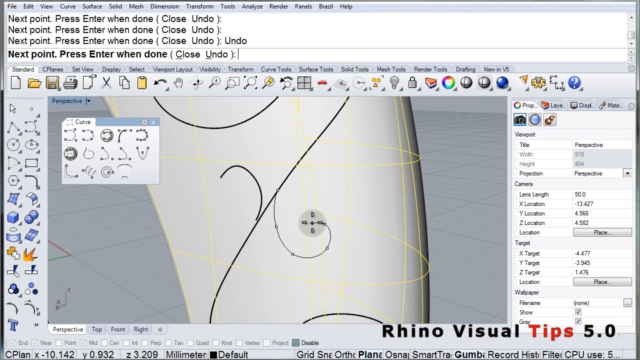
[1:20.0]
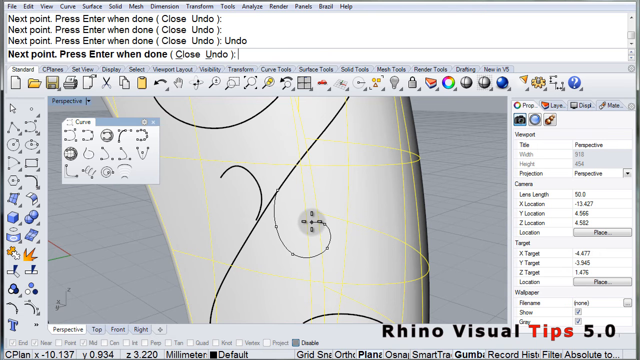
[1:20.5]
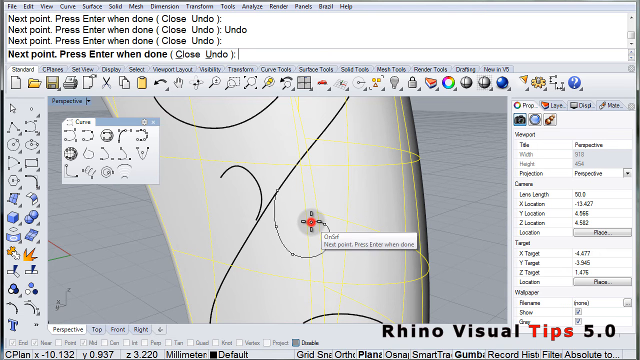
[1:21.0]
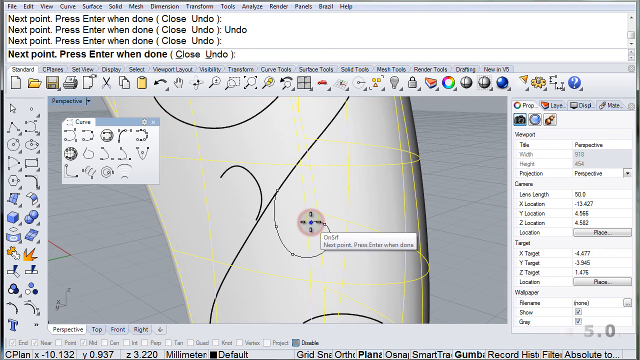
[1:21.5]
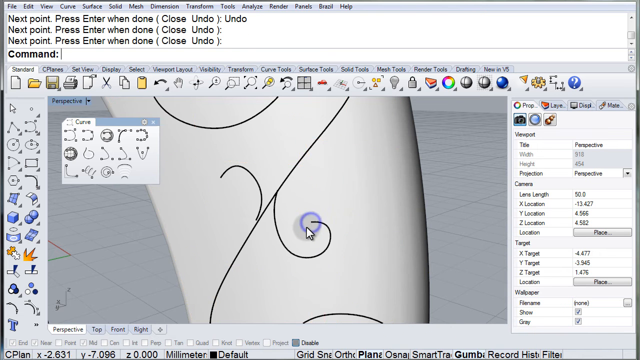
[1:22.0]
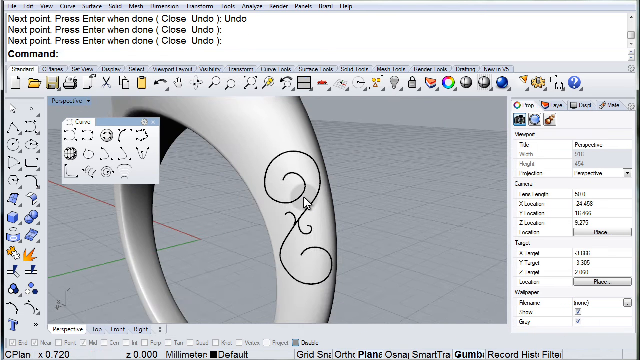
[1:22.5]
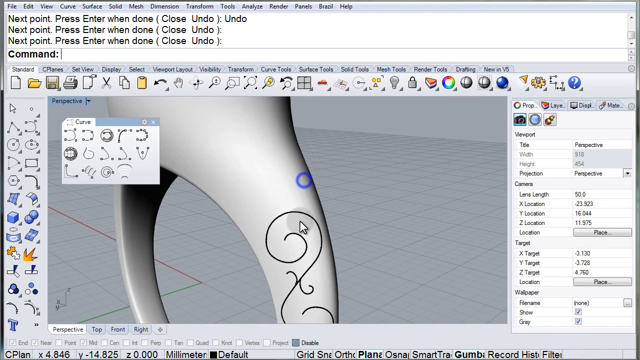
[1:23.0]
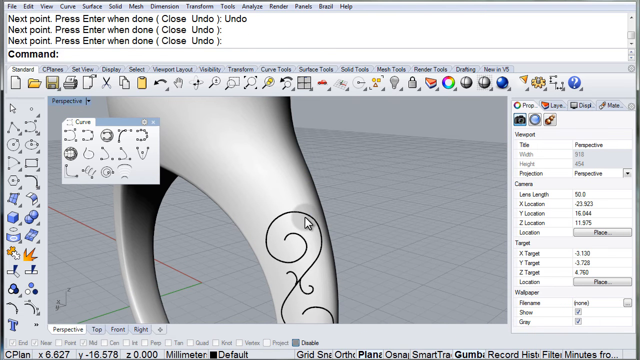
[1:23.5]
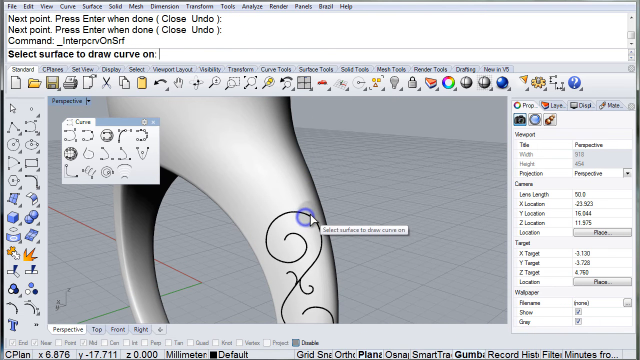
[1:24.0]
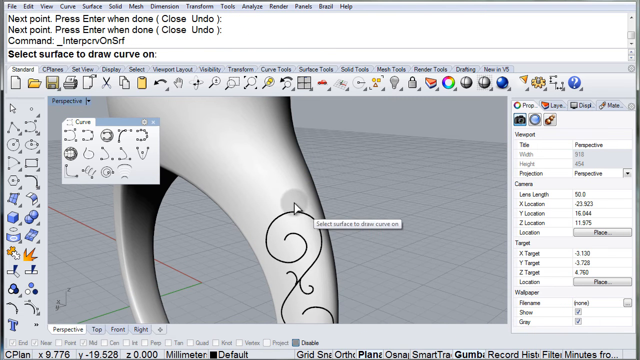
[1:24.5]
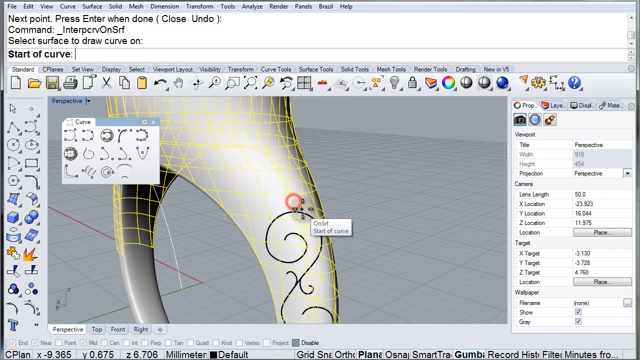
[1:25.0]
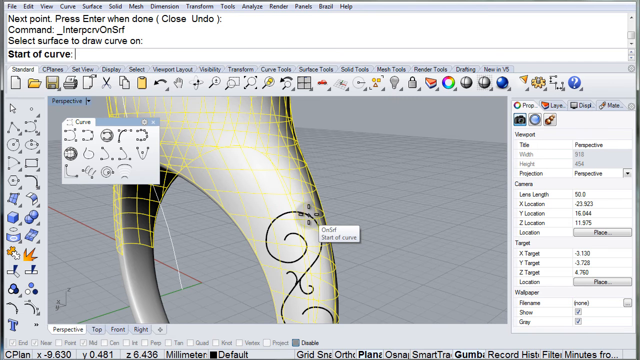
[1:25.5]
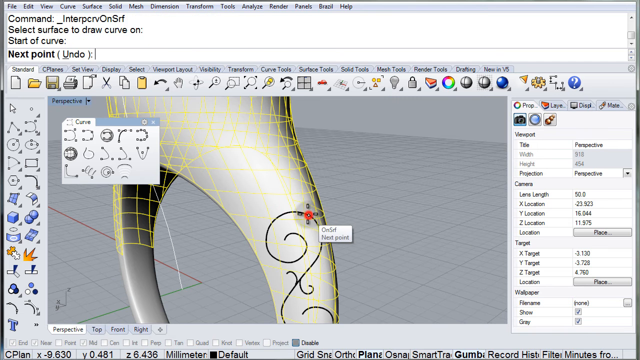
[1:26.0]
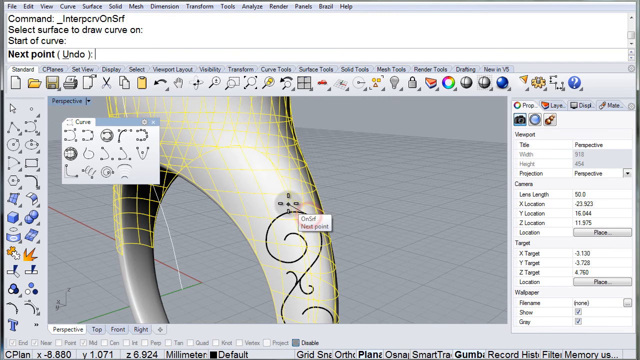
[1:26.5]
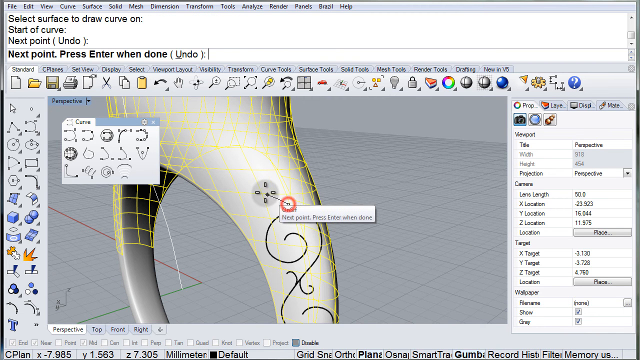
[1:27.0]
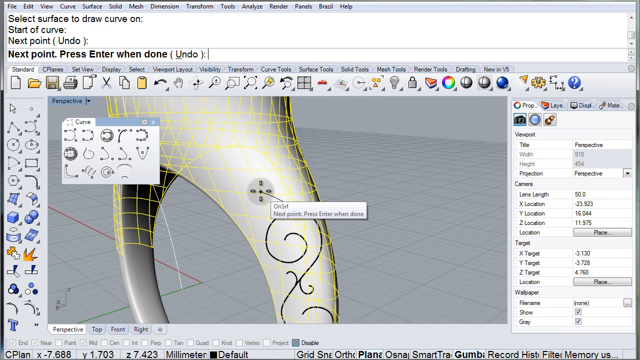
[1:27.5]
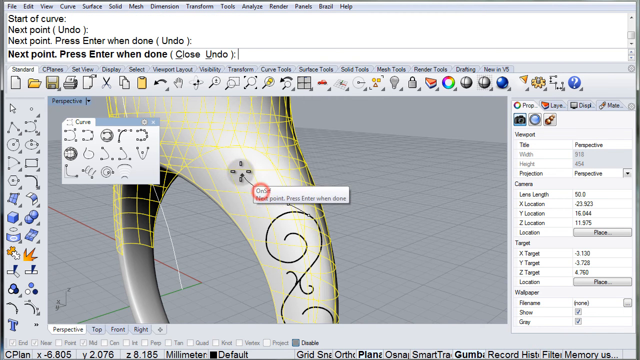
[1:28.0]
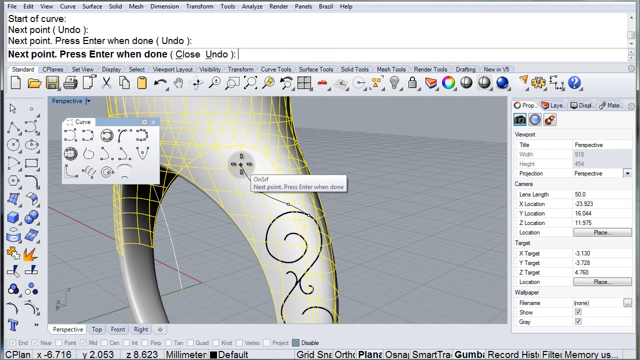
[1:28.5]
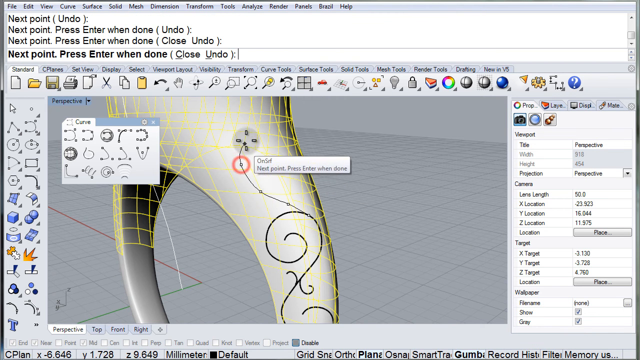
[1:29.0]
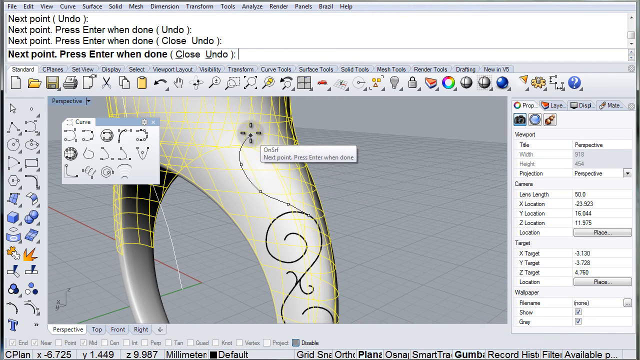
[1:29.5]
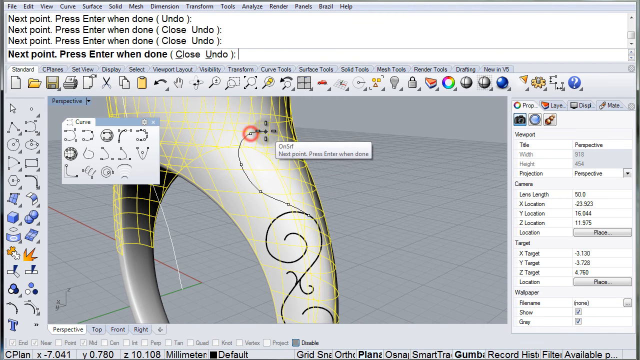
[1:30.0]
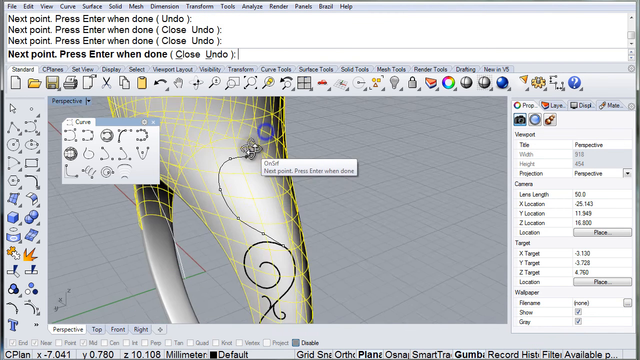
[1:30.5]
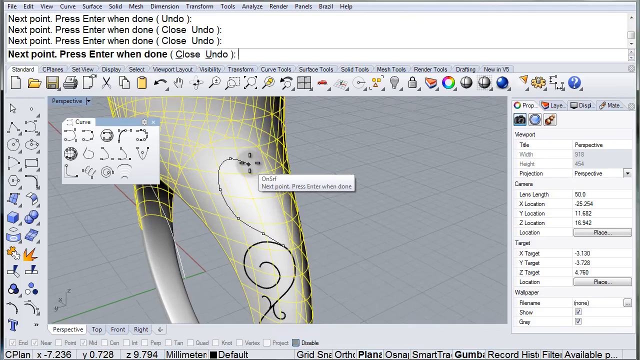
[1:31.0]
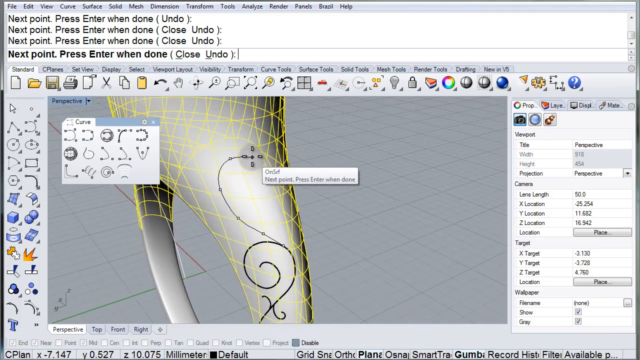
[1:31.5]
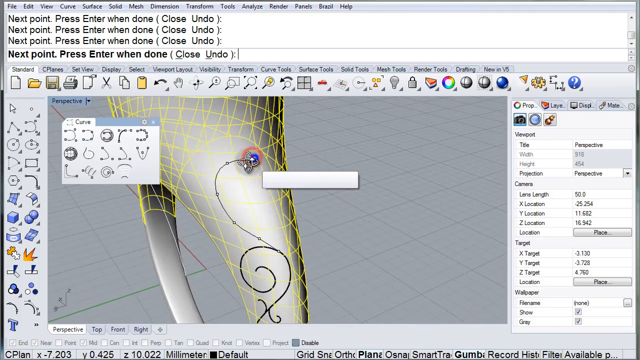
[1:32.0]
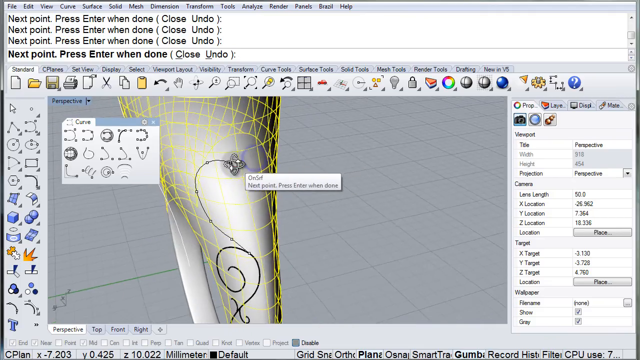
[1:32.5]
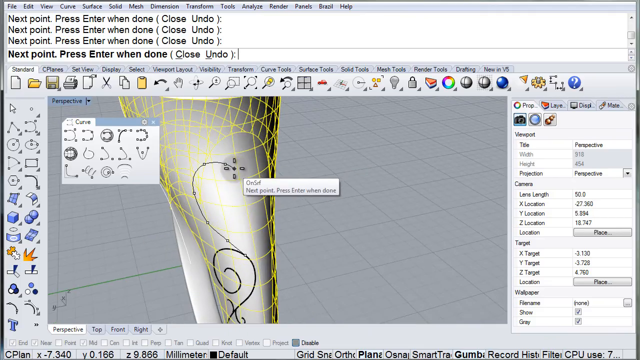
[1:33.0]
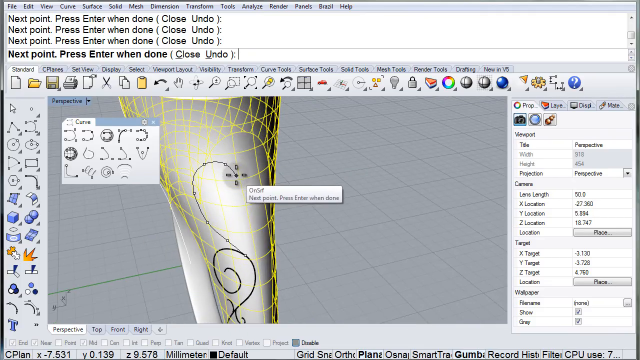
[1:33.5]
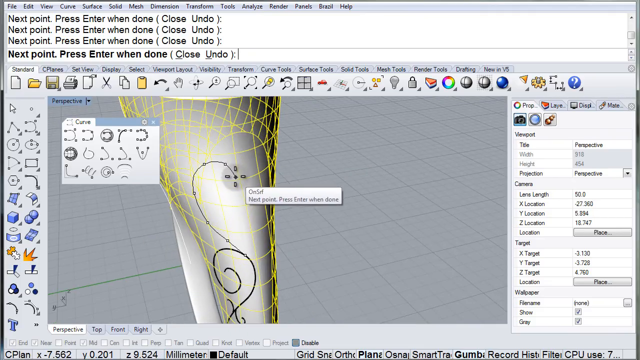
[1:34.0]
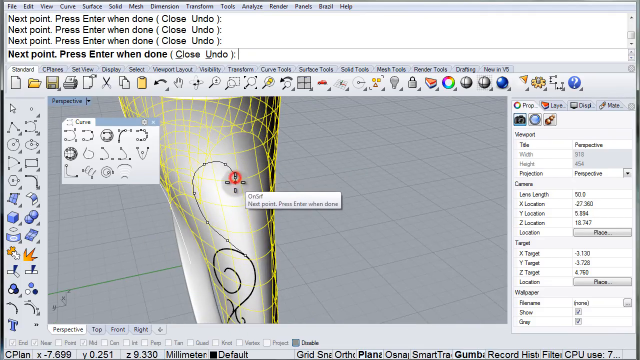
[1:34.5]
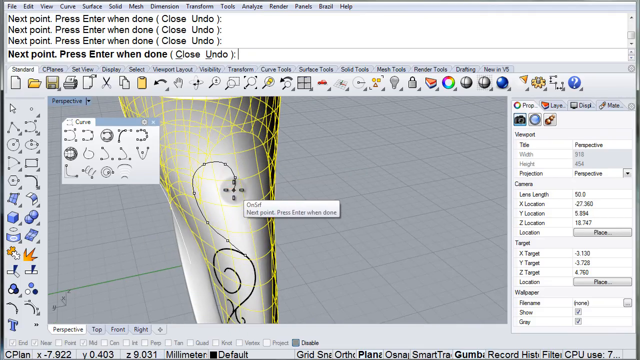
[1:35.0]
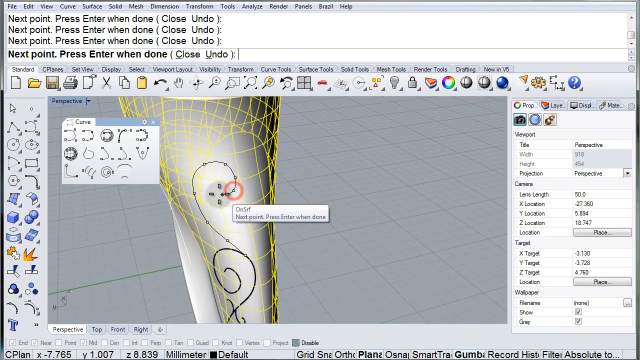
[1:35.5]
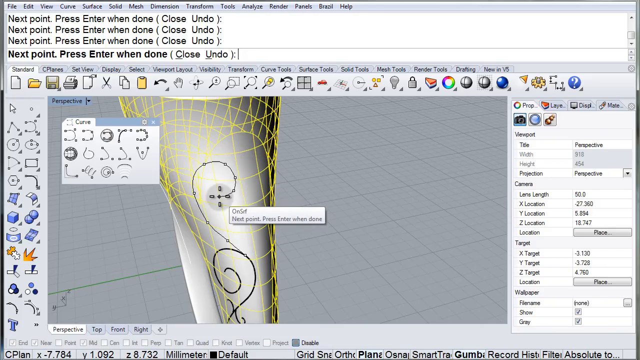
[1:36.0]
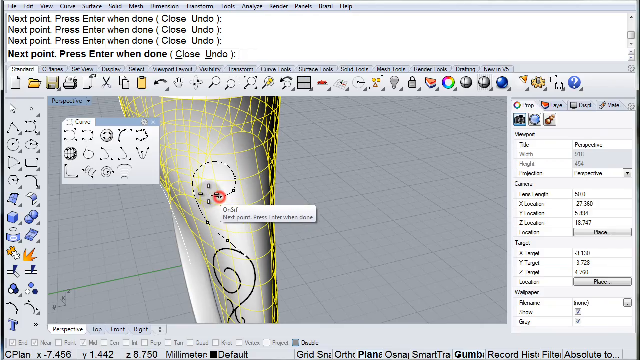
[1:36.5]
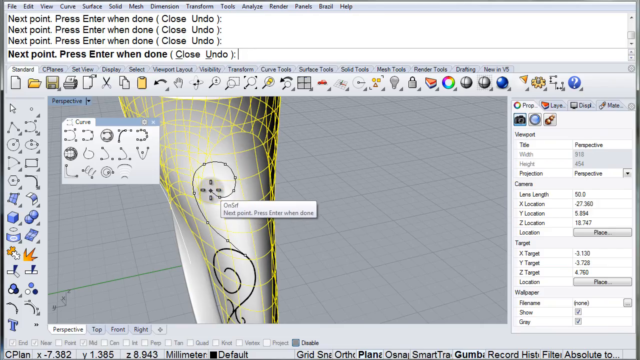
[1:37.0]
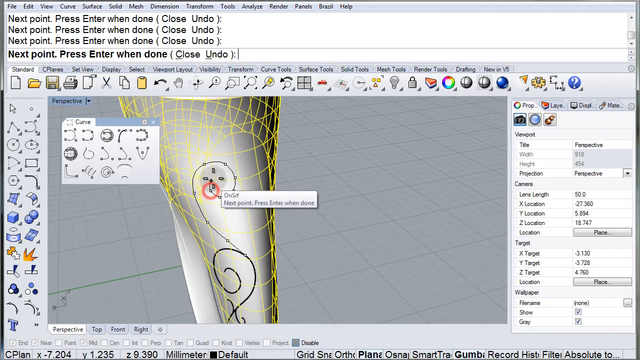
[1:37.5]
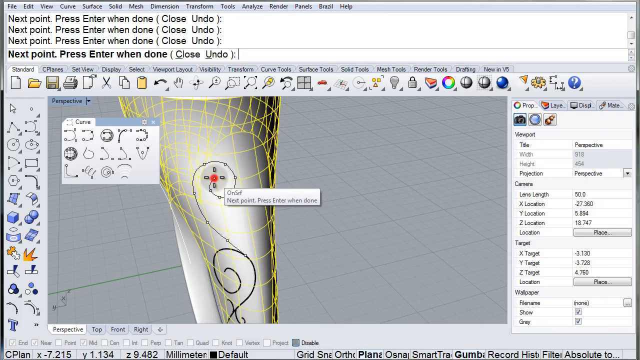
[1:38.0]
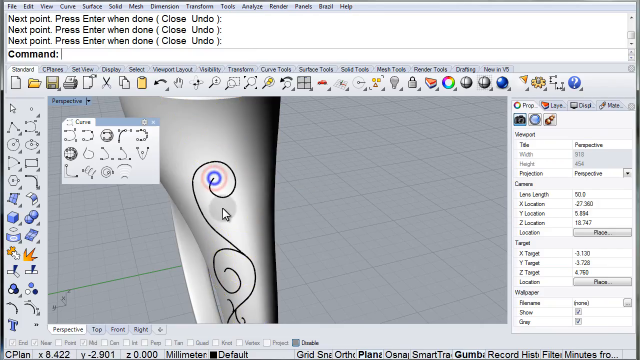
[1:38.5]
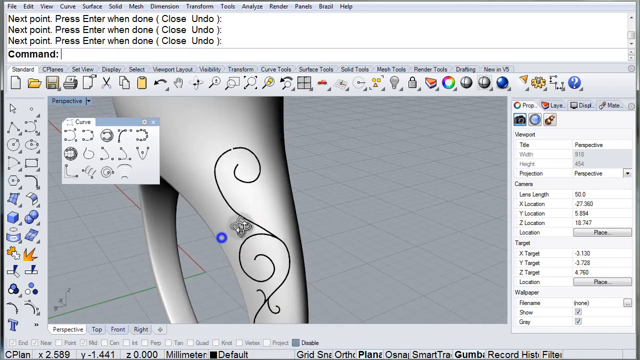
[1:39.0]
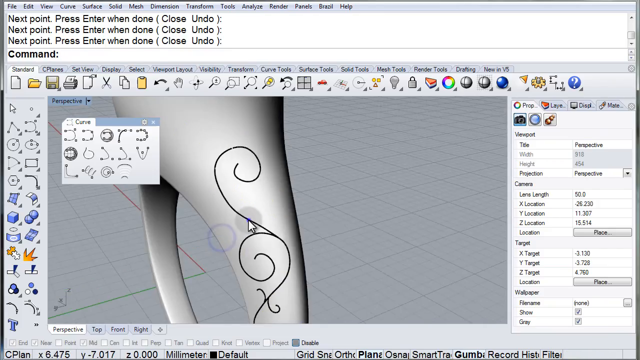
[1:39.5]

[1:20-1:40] The view is zoomed in on the small curlicues: the top one comes out of the center of the diagonal line and makes a tiny, short curve up and to the left, and the mouse finishes a symmetrical curlicue right underneath it that goes down and to the right. After the last click, the view zooms all the way out. The mouse clicks at a point coming off the top spiral and keeps clicking up around the curve of the ring, making what looks like another clockwise spiral; whereas the previous clockwise spiral pointed to the left, this one points to the right. As the path comes onto the shoulder of the ring, the flat piece that comes down from where the gem setting would be, the view of the ring turns so that it is seen from side on and kind of from the top, instead of more face on and from the side. Every time the mouse clicks a point, another line of text appears at the top reading "next point, press enter when done (undo)", and the bottom line is always bold.